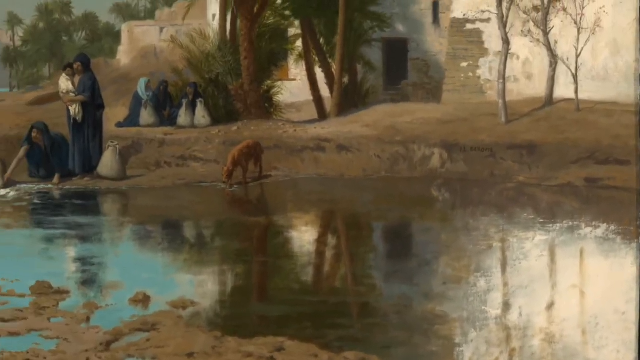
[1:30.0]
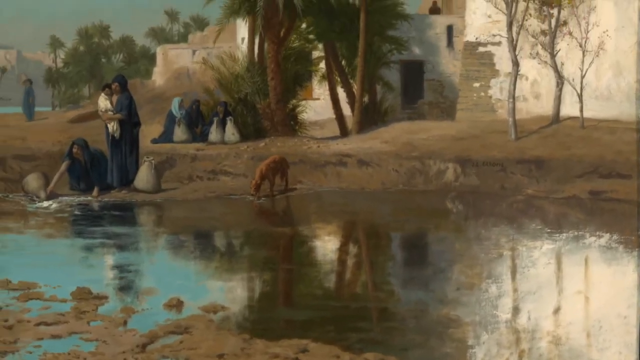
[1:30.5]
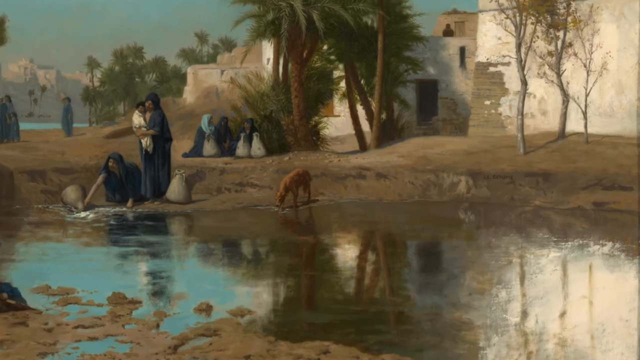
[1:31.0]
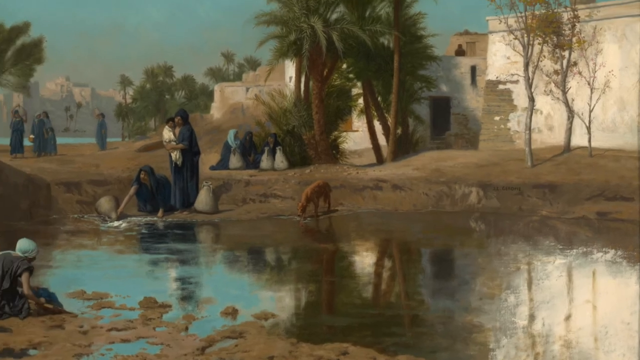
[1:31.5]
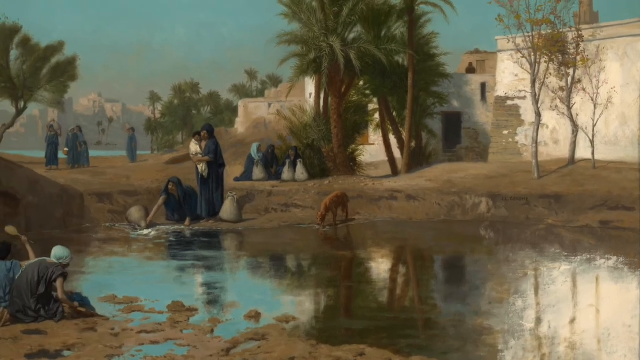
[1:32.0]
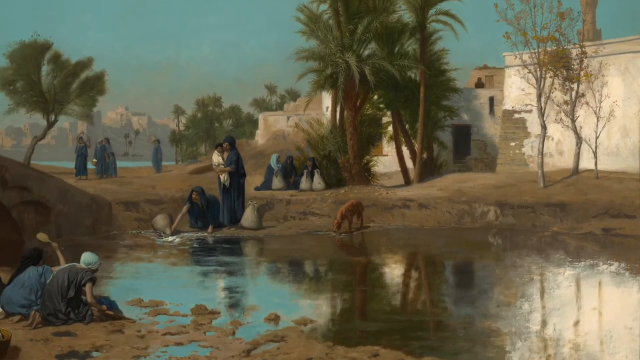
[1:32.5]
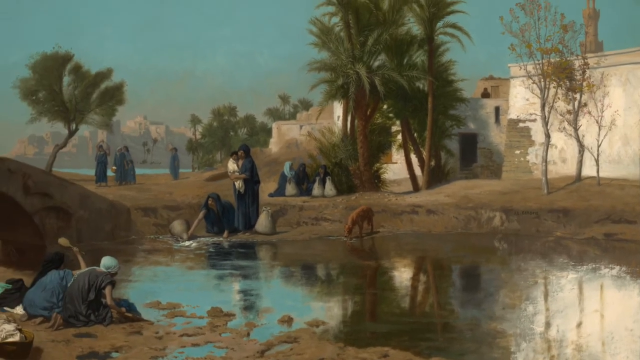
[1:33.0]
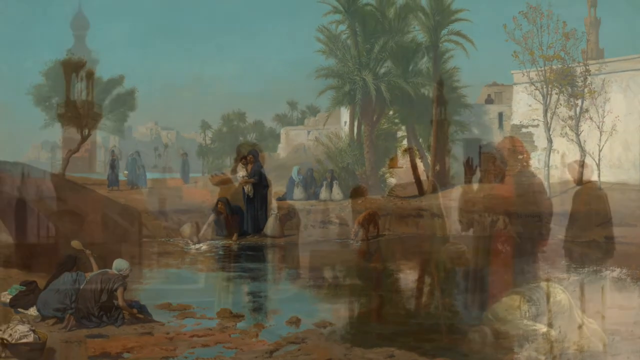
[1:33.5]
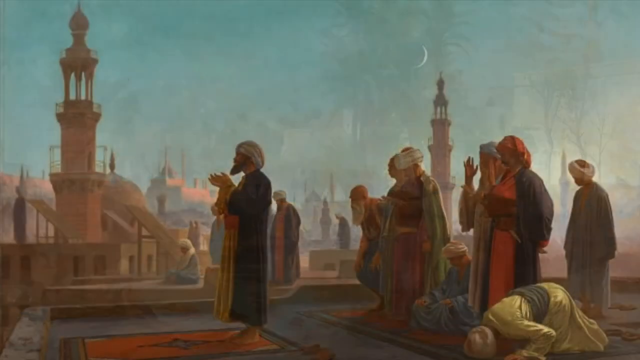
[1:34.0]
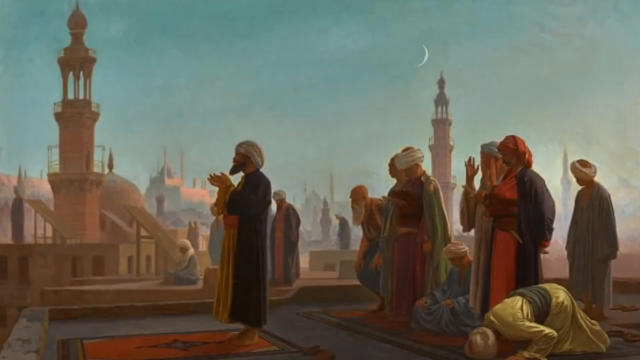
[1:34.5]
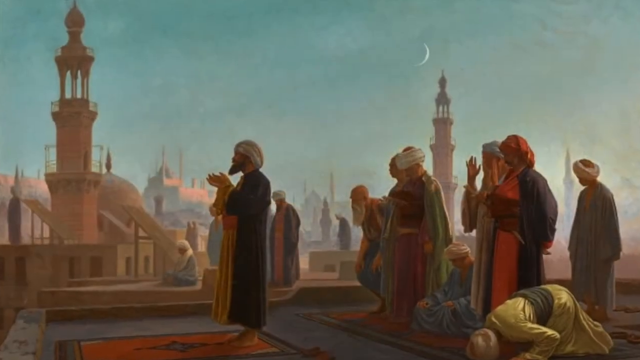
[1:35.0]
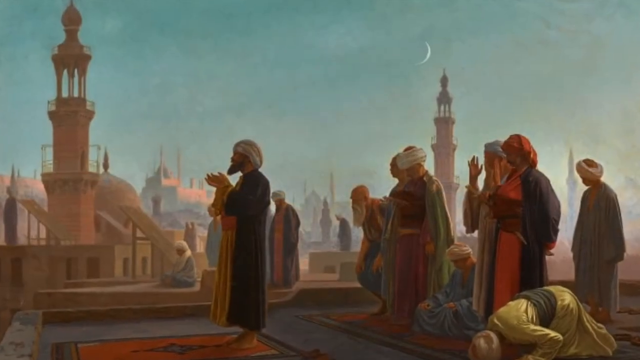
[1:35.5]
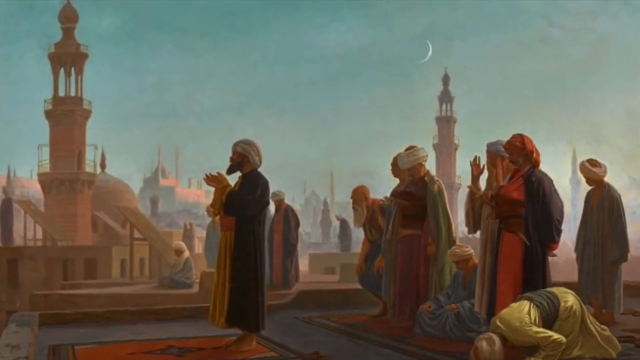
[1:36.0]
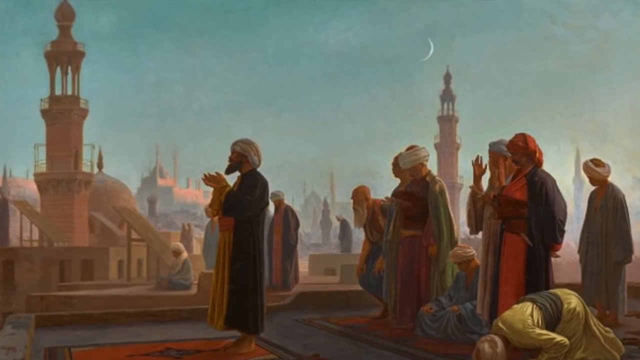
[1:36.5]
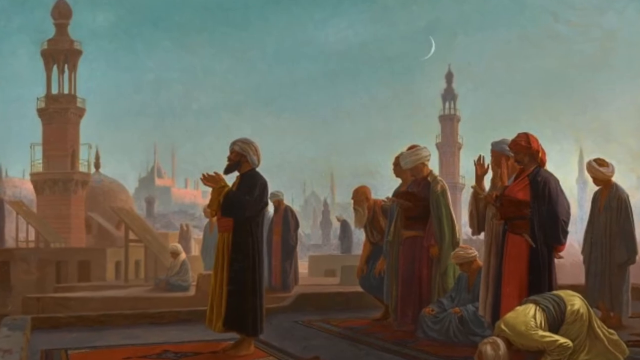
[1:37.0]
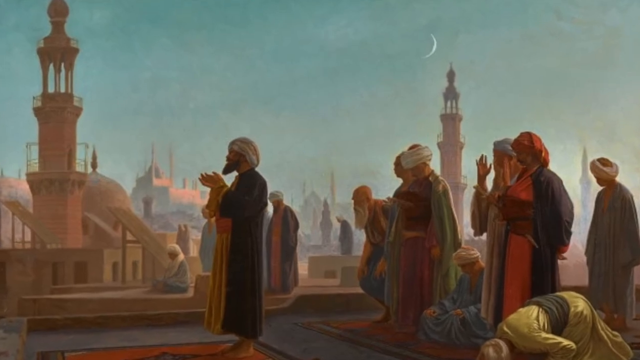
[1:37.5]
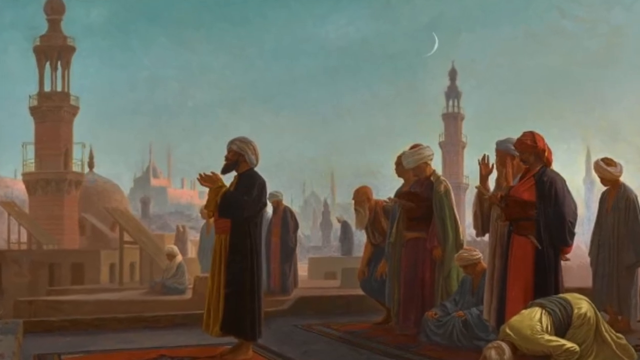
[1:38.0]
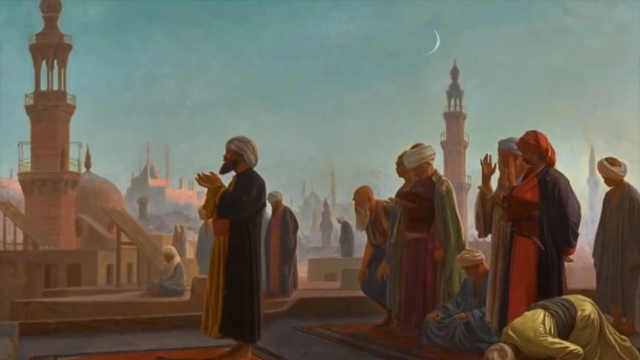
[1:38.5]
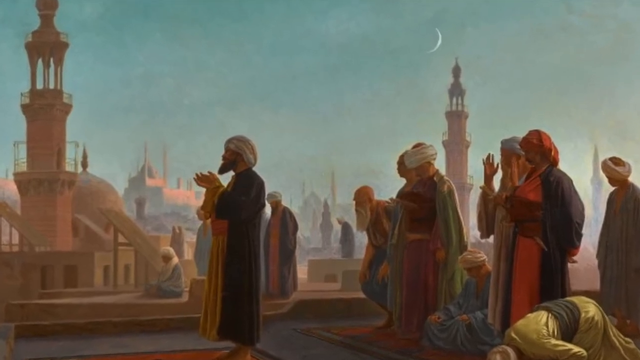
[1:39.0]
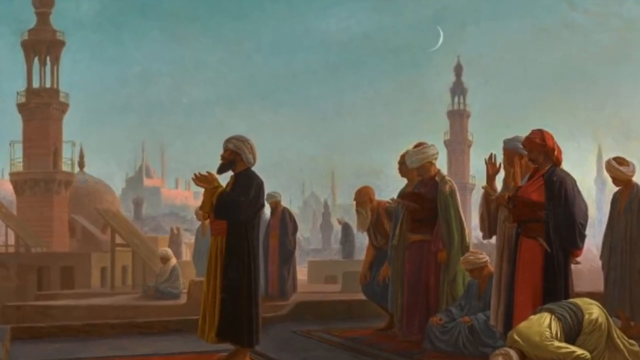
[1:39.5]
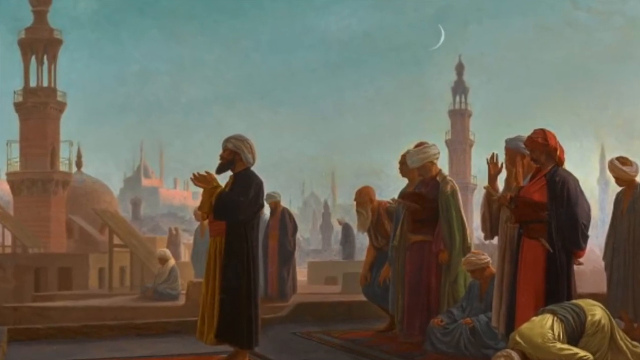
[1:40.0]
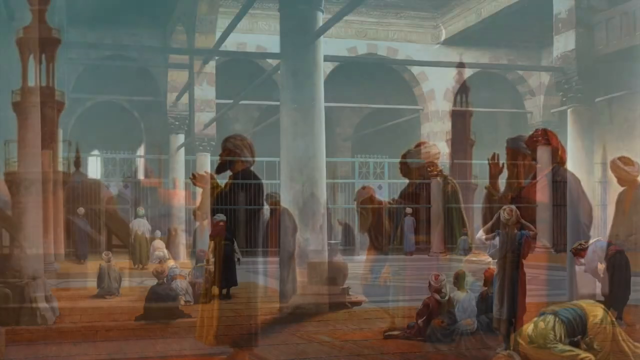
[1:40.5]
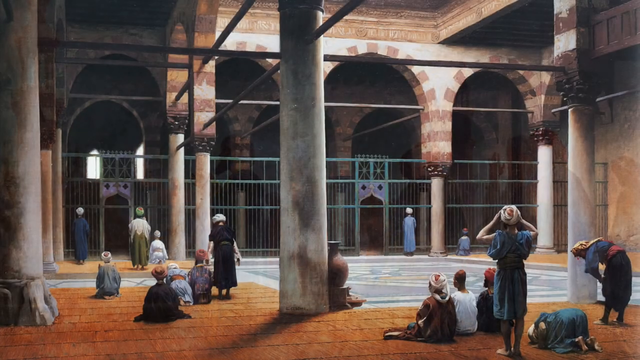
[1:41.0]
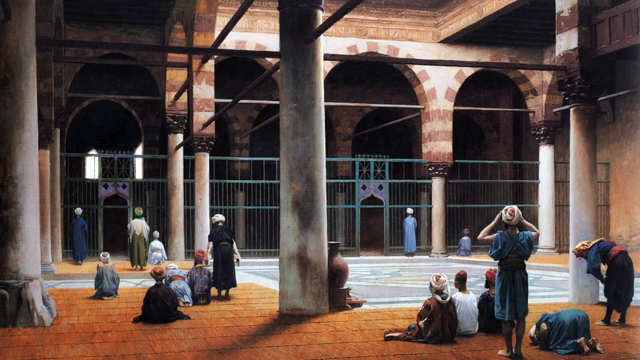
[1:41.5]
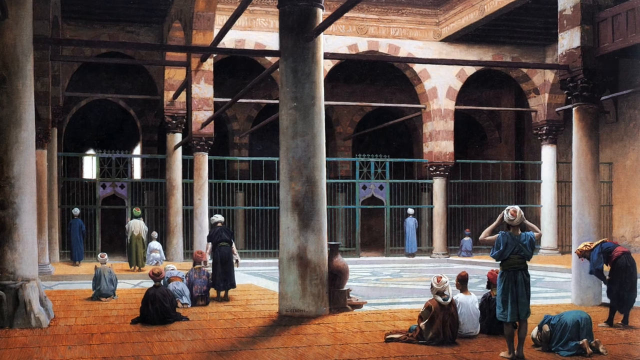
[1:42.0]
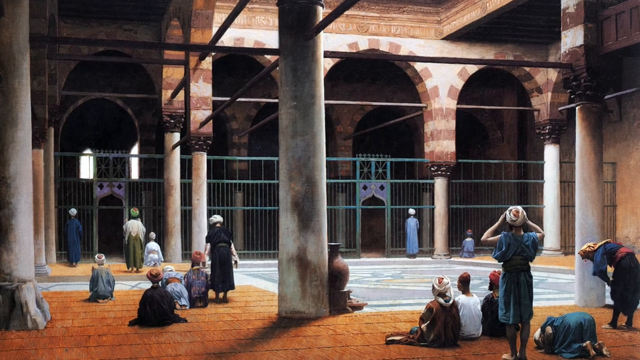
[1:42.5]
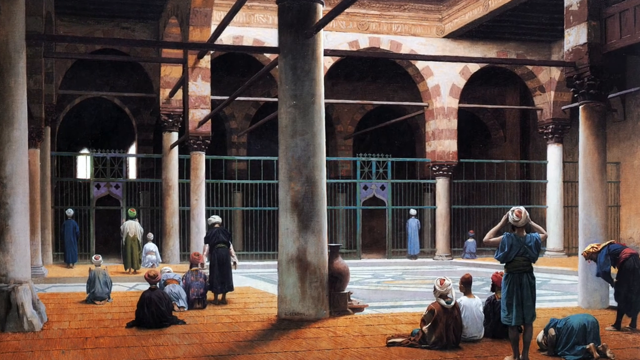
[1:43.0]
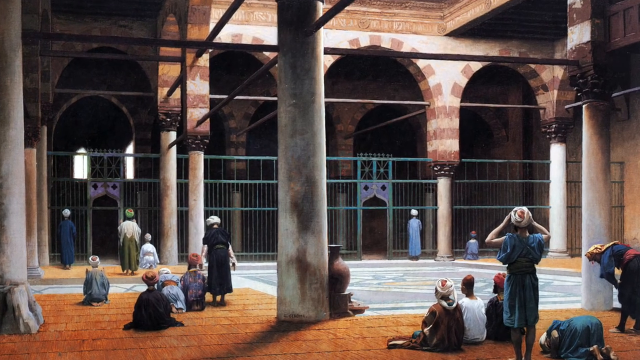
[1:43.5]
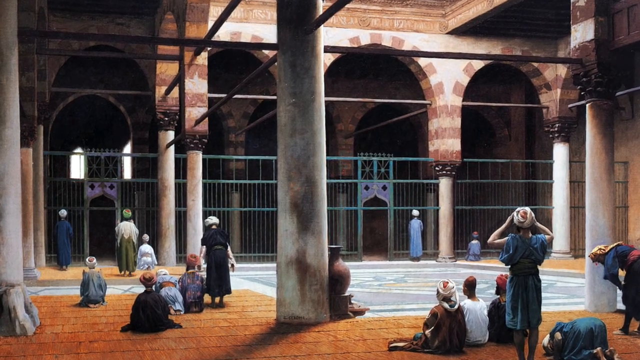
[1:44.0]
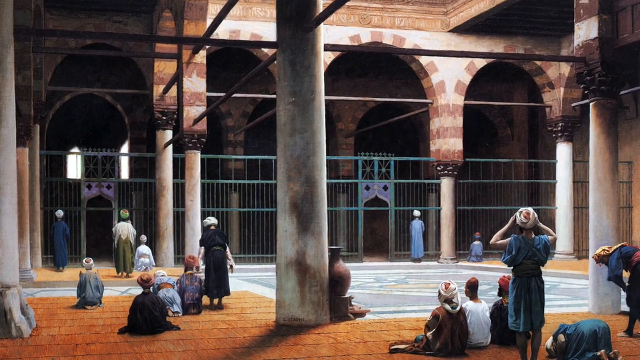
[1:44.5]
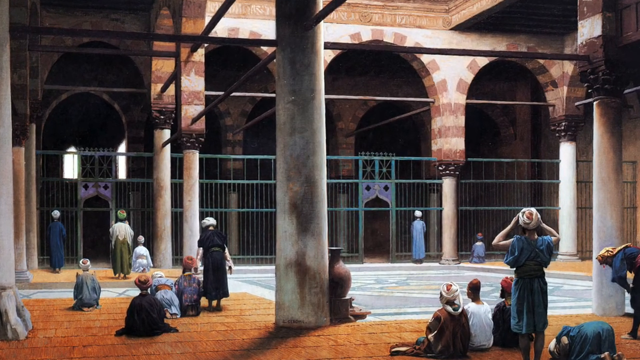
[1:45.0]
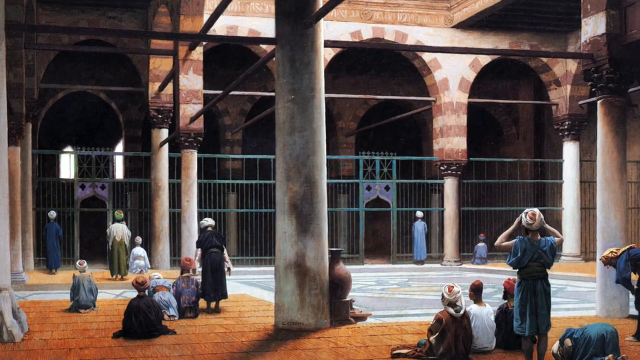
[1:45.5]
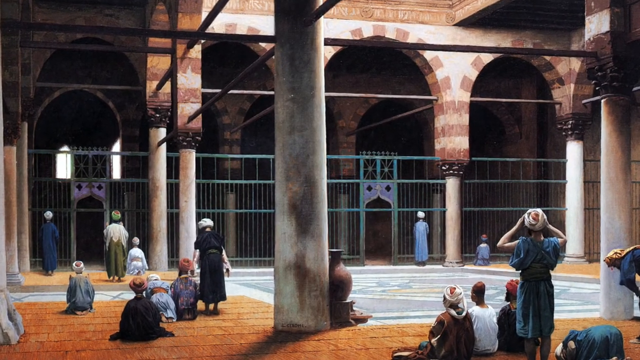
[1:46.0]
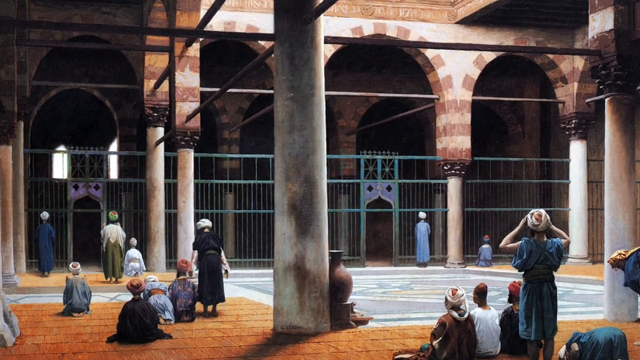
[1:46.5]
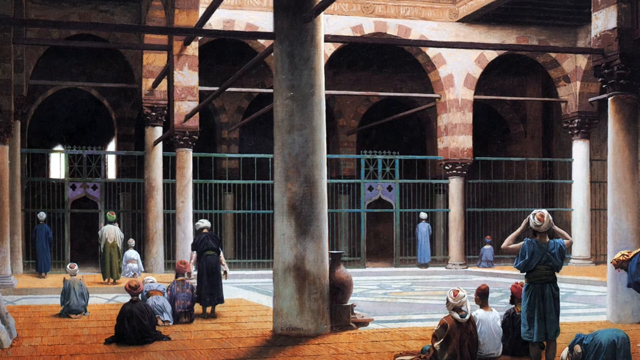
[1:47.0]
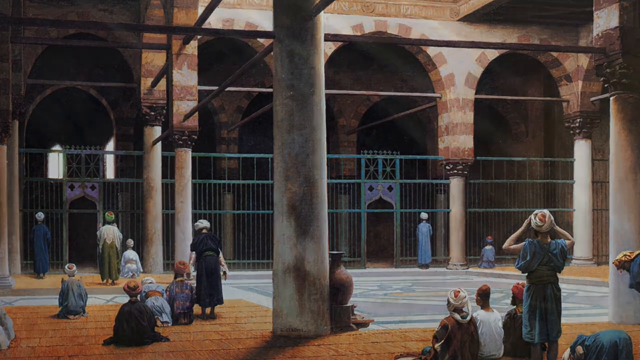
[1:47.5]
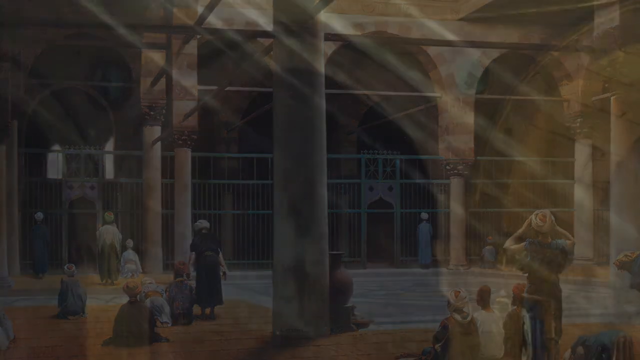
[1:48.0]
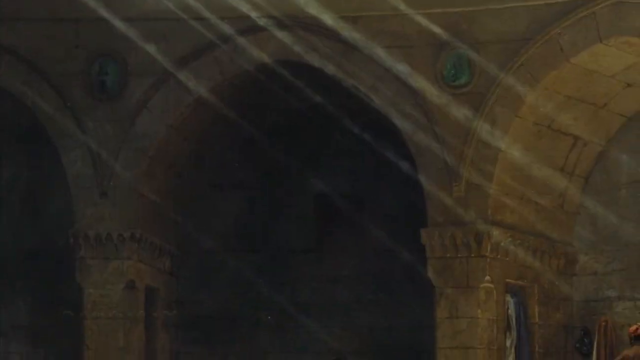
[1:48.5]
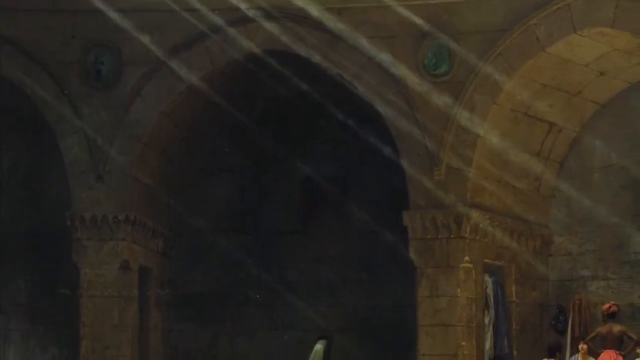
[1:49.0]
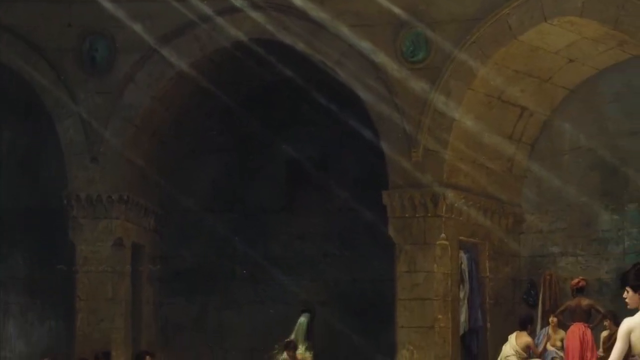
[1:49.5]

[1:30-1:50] A dog drinks by a stream right next to a family, who seem to be doing some cleaning or gathering water by the stream. Another shot shows close to 10 people who look like they are praying. The view pans out to what seems to be a large prayer room, possibly. Not many people seem to be there; the main center is empty, but around it are various people, smaller ones, possibly children, and possibly some females, probably praying. The structure has a gate and two entrances, and various pillars can be seen. It looks like an older building. An older-style potted vase is up against one pillar, and two individuals in what are kind of the same uniform stand by the entrances of the doorways.